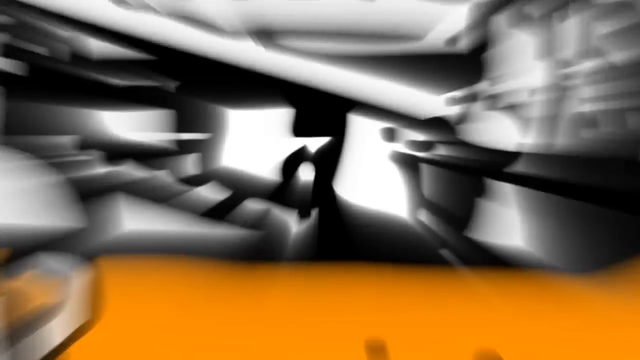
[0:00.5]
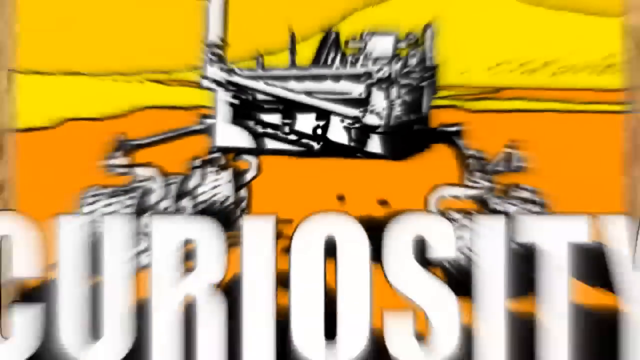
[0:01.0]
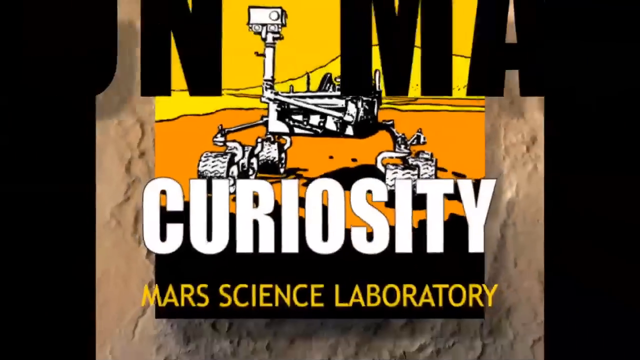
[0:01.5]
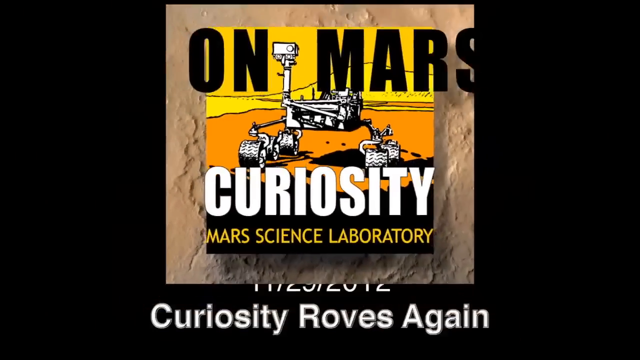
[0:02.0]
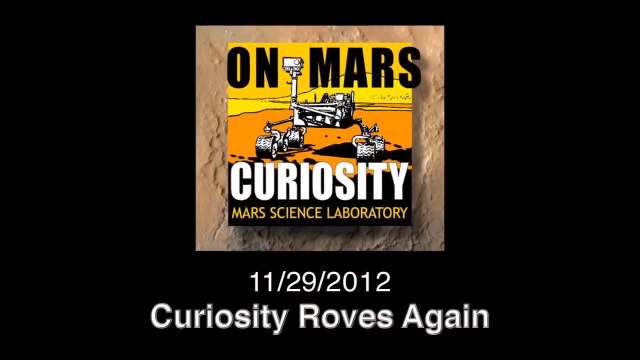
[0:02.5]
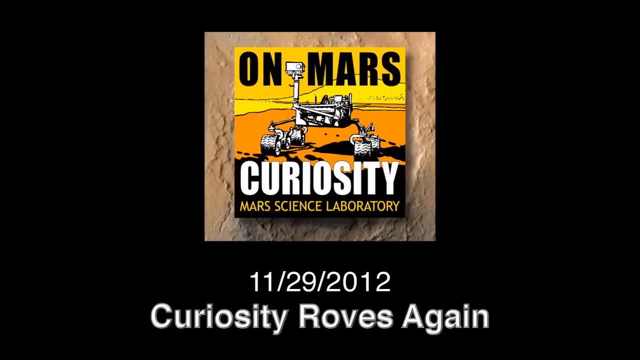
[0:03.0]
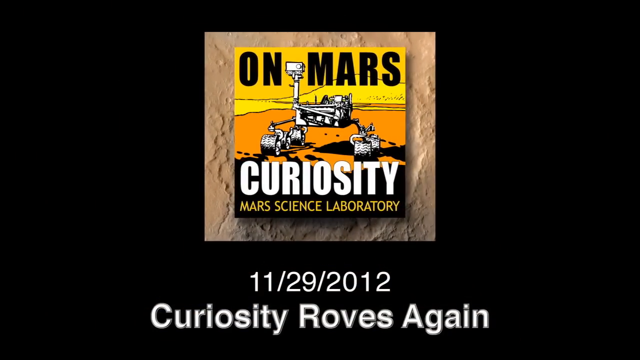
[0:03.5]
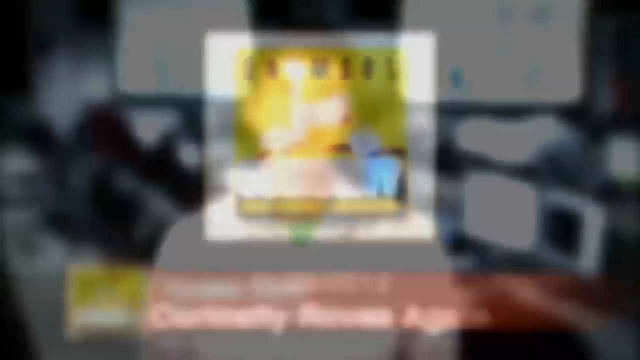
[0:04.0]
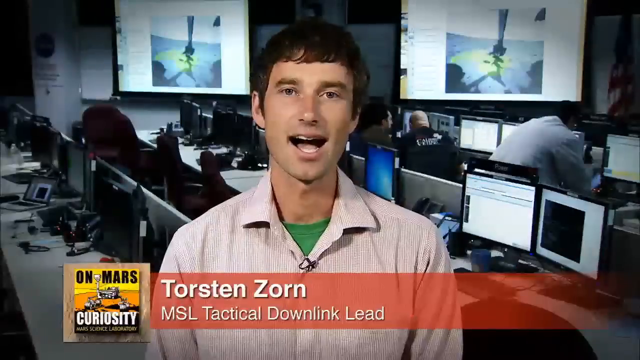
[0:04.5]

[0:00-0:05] The title "On Mars Curiosity, Curiosity Roves Again" appears on the screen. A man in a striped shirt talks to the camera, sitting in some kind of computer control center. Next comes a sort of cream-colored visual with something highlighted that looks cloud-like; it is not clear what it is a picture of. A Mars rover appears, and the view zooms in on its camera arm, followed by a diagram of the rover on the surface of Mars with the camera arm moving around. The Martian landscape follows: brown, dirt-like rocky soil that looks very dry. A black-and-white close-up of something from the rover looks very dusty, and the angle changes a couple of times. Different close-up shots show the rover itself, and a map shows where the rover has been, with spots marked and numbered on it. Another shot shows the rover maybe taking a sample or putting something into the surface of Mars, and the video ends with someone talking to the camera, apparently in the Jet Propulsion Lab.